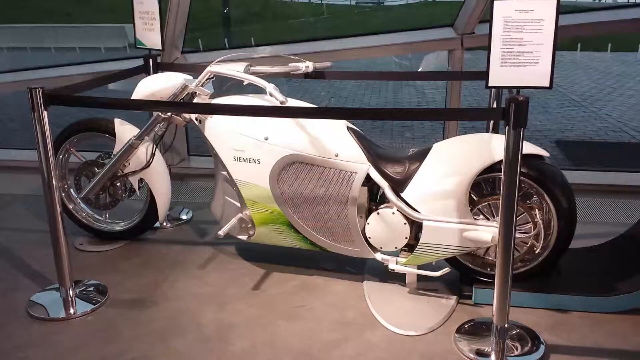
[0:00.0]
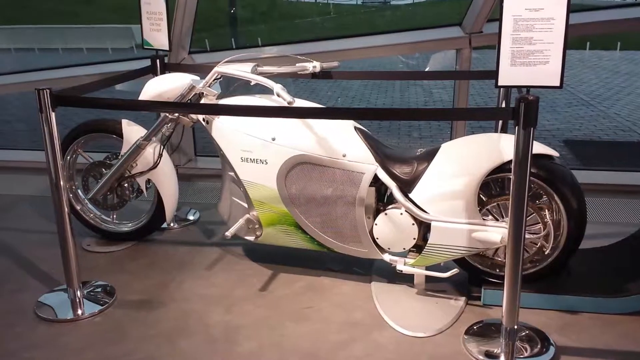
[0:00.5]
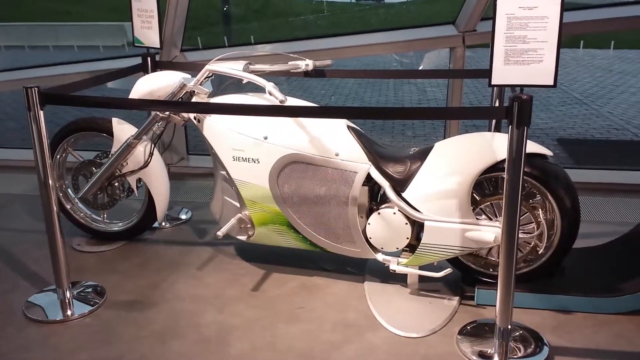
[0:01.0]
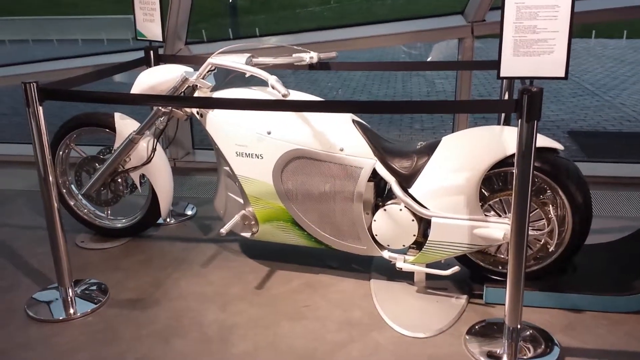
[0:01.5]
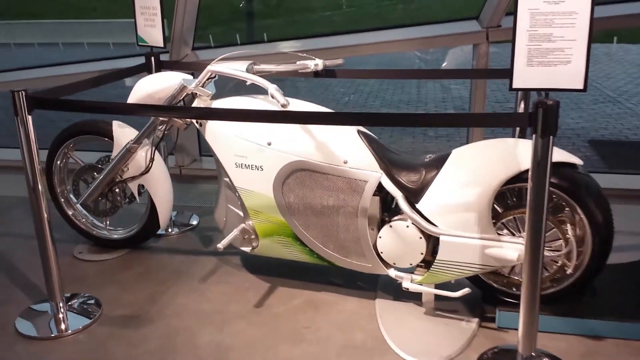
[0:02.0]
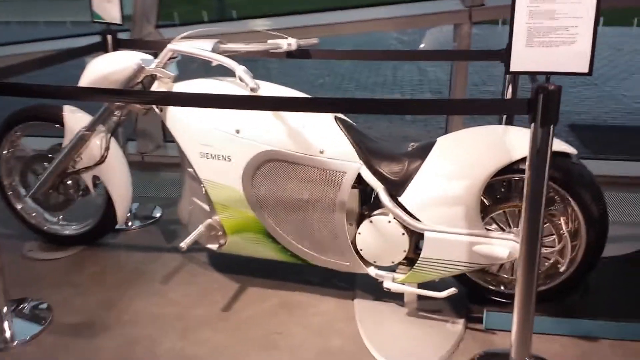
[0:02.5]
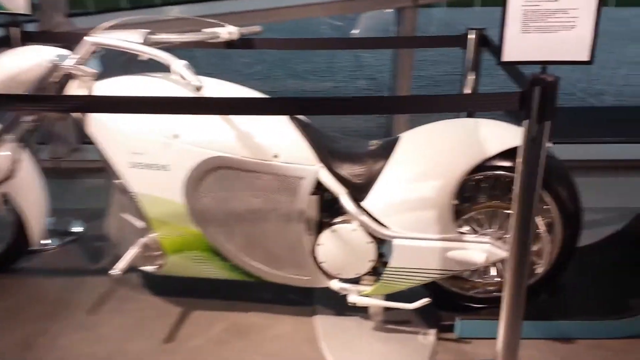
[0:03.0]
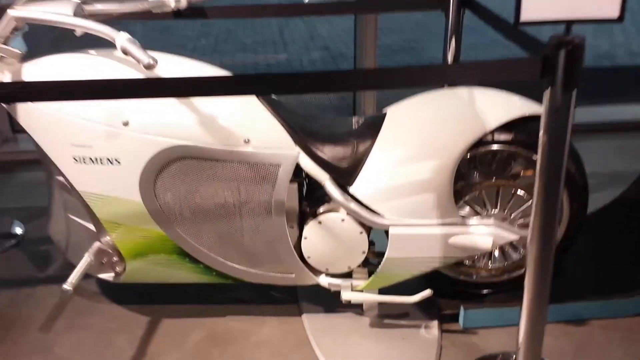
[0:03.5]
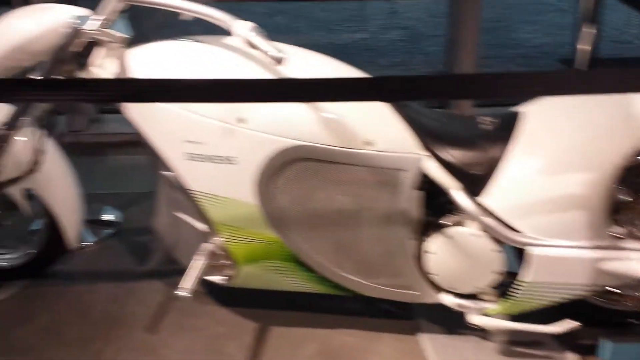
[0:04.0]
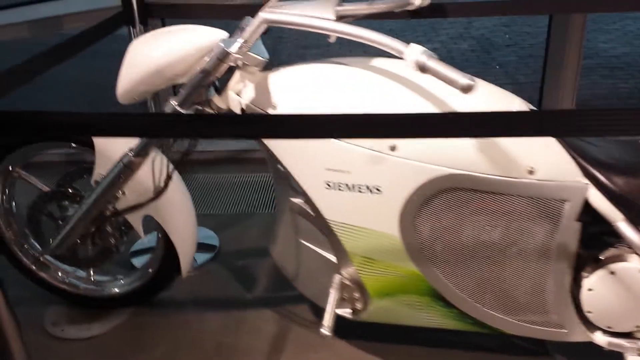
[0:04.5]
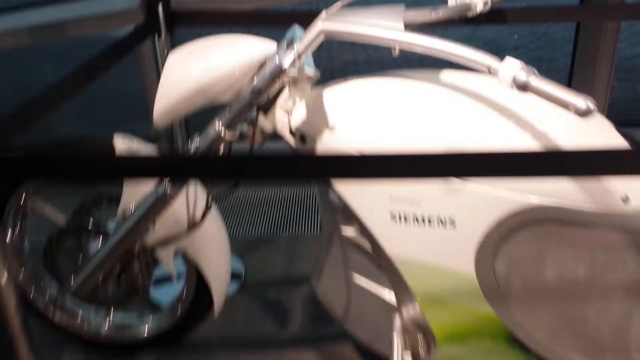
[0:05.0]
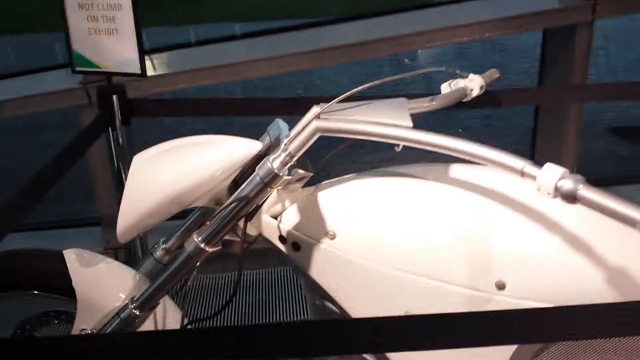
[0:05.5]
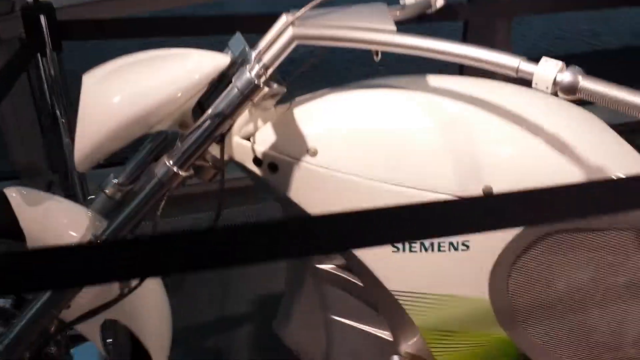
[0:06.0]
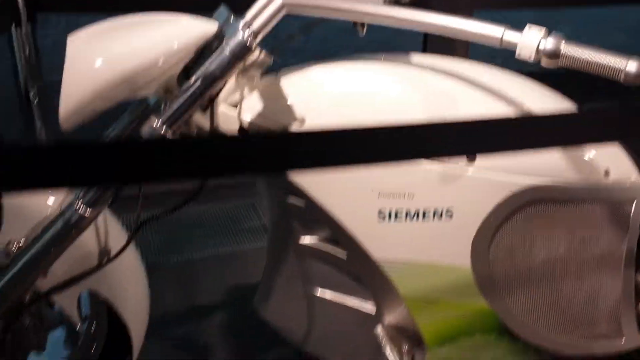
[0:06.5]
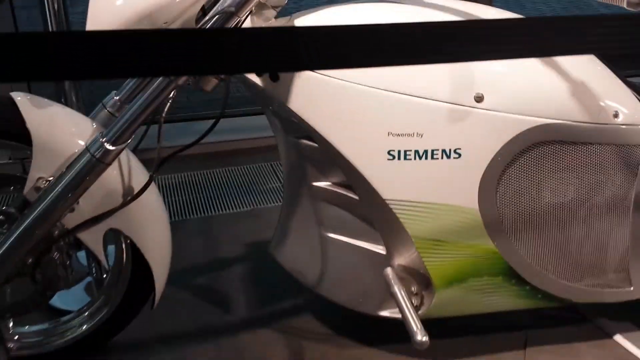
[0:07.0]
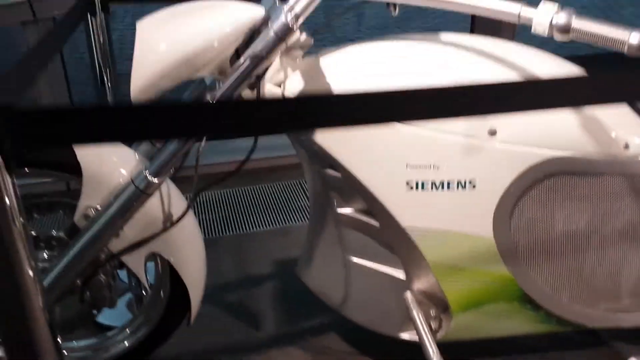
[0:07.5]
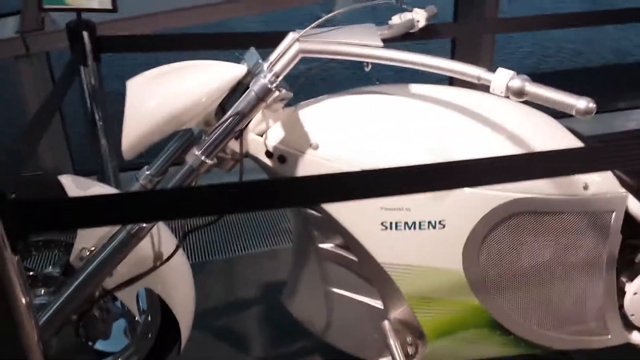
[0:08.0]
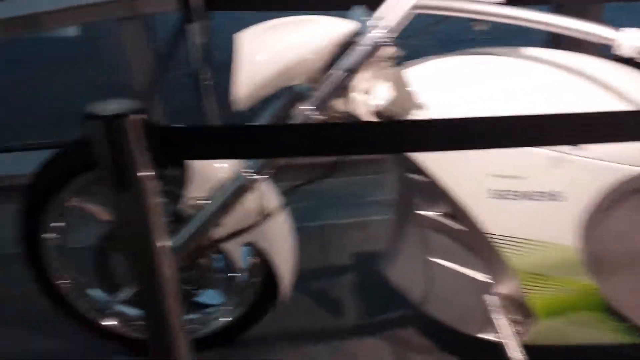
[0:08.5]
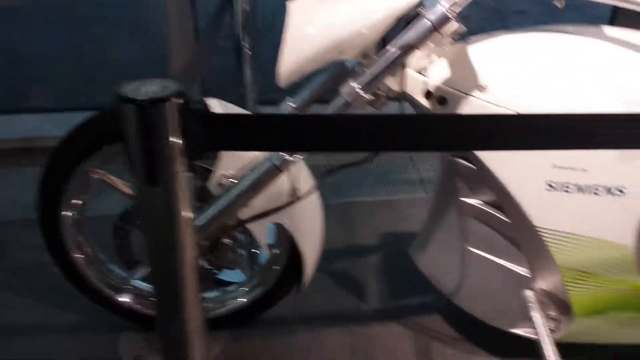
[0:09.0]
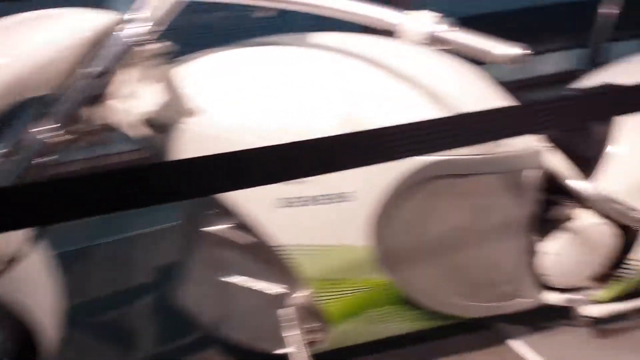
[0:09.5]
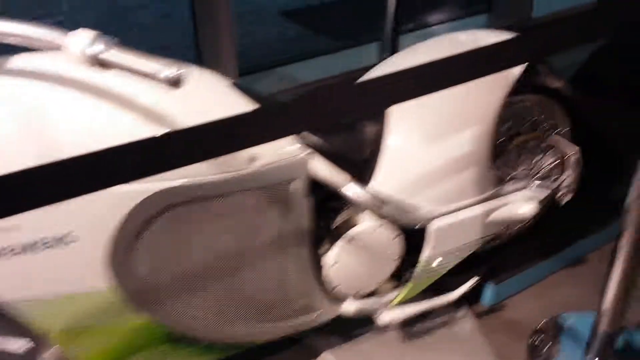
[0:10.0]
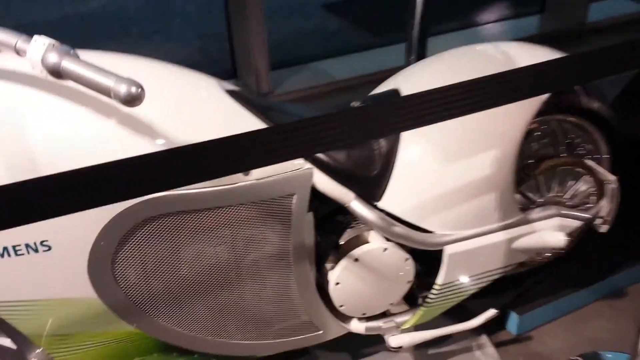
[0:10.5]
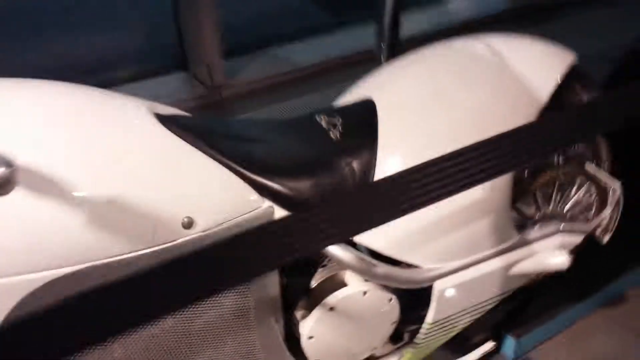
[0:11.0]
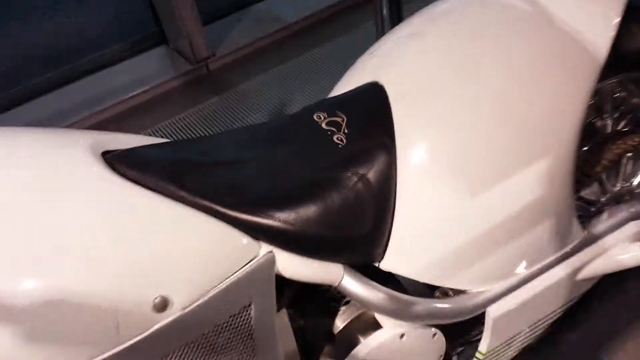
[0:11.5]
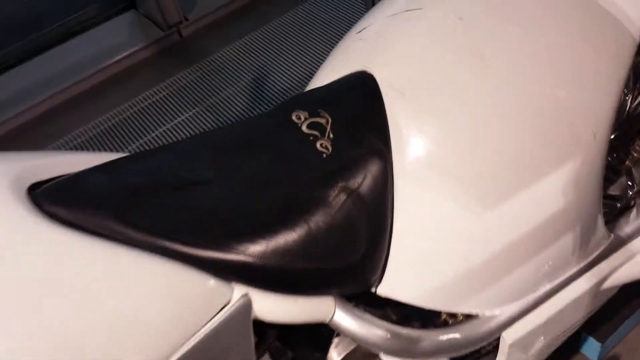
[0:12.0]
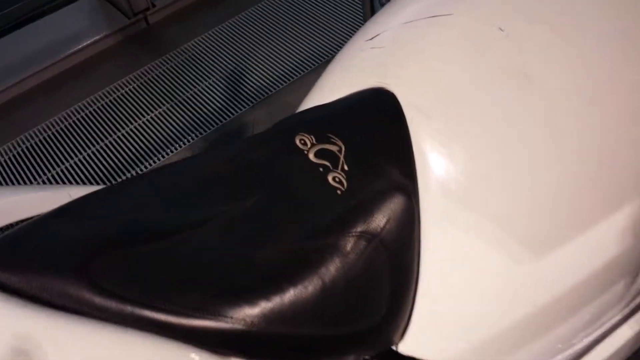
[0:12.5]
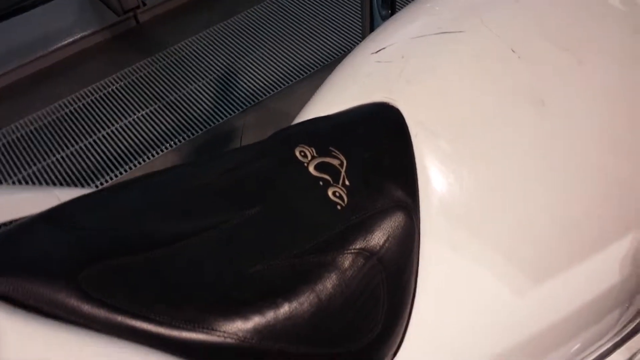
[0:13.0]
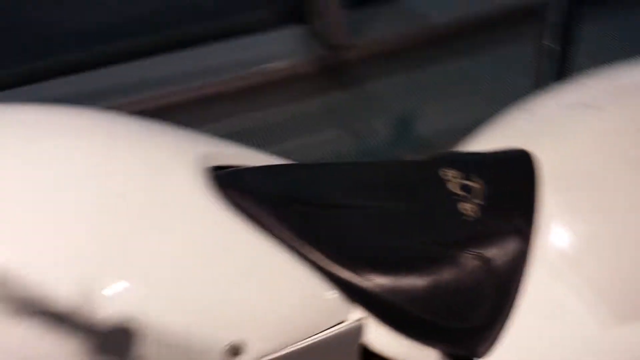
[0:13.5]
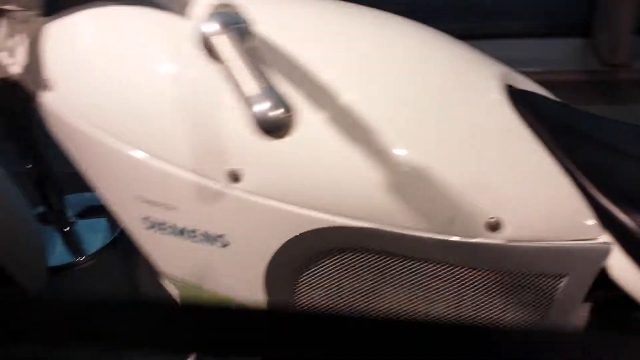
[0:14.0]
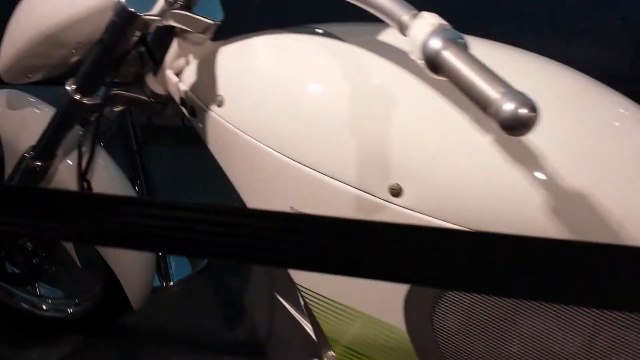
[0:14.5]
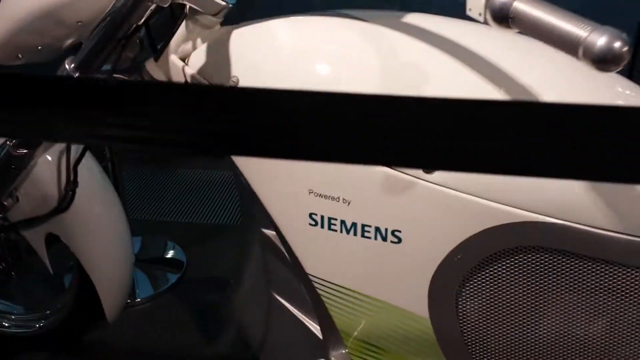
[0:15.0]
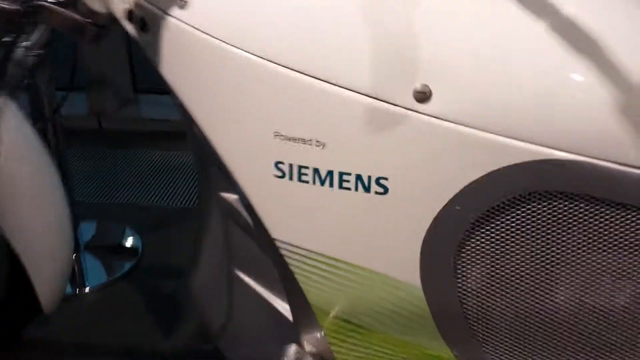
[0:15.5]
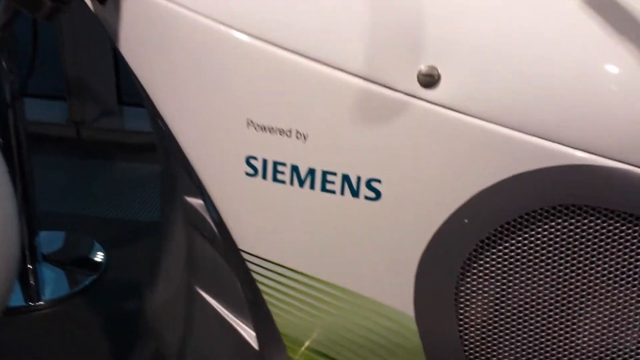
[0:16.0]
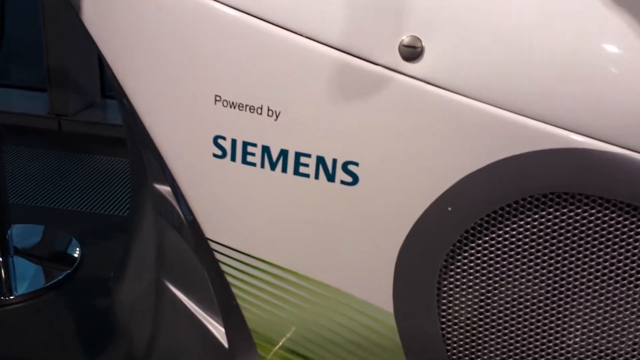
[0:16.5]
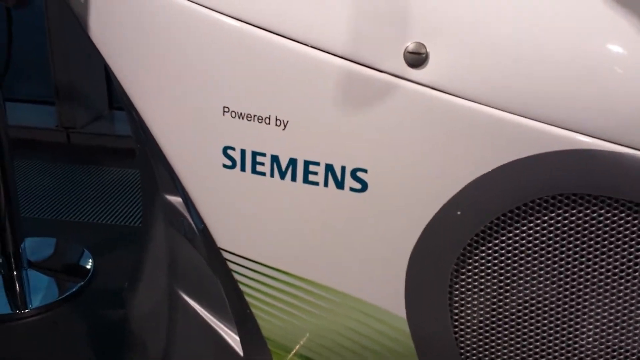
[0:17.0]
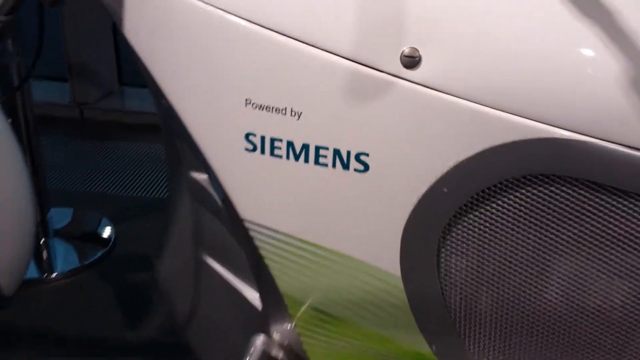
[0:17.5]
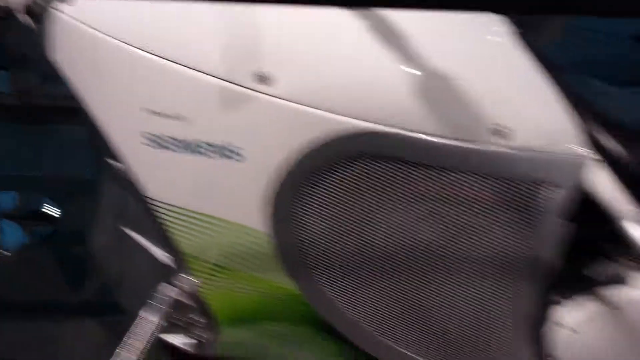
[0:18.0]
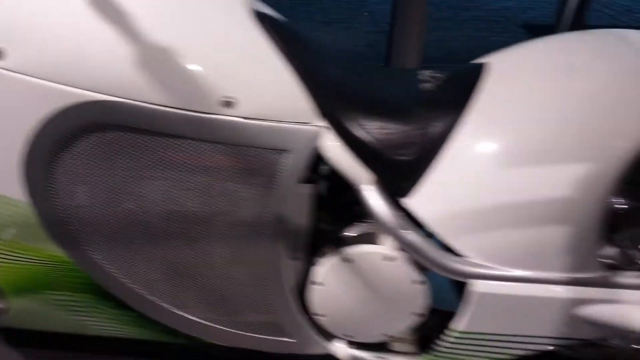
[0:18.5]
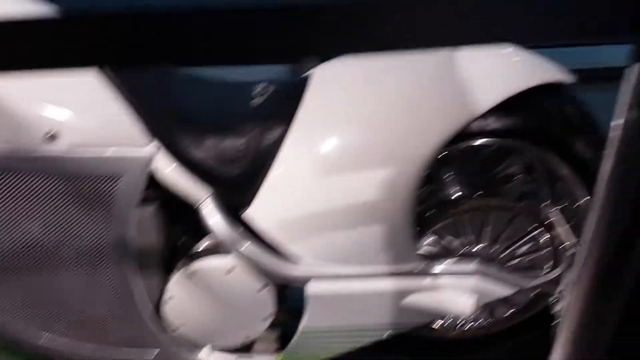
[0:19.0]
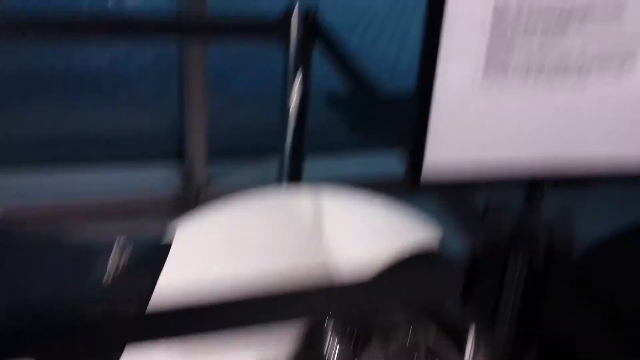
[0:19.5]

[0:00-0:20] What looks like a custom-made motorcycle is on display. Four silver chrome bars around it hold up a black tape that keeps people from getting close to it. The motorcycle is white and looks like it is made mostly of fiberglass. It is very stretched out and very long, and the front of the bike sticks out very far on the right side. The camera shakes quite a bit as it moves up to the bike. It goes from the seat and pans up toward the front, goes down to the front tire, then back to the seat, which is black leather and carries an Orange County Choppers decal. It then goes down to just below the gas tank, where the text reads "Powered by Siemens", and then back to the back tire.